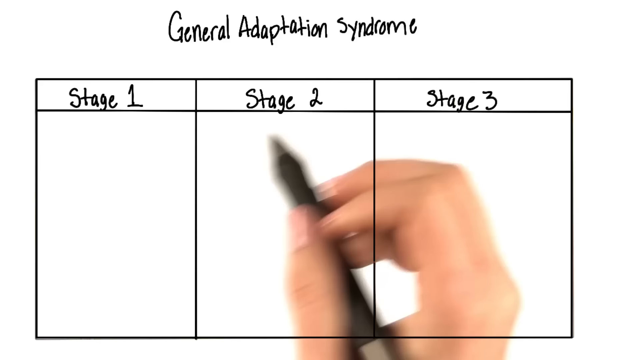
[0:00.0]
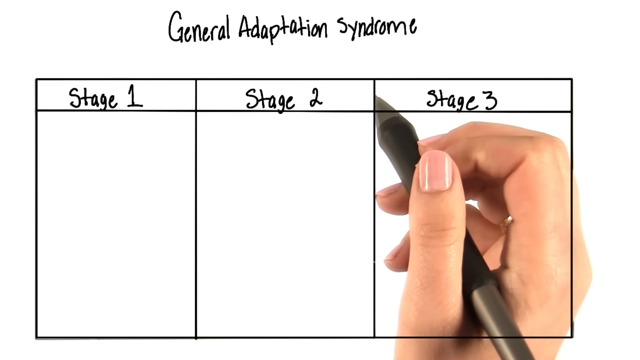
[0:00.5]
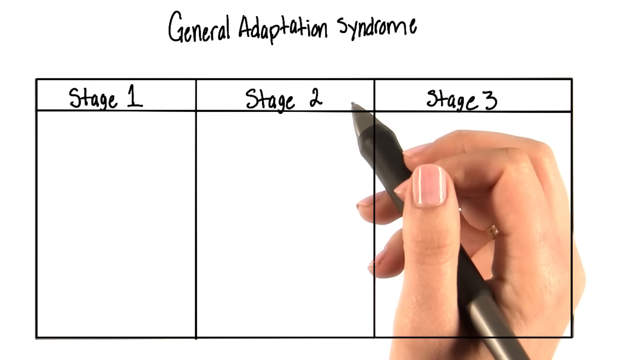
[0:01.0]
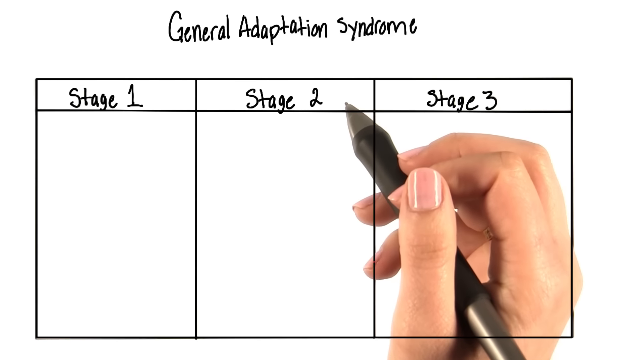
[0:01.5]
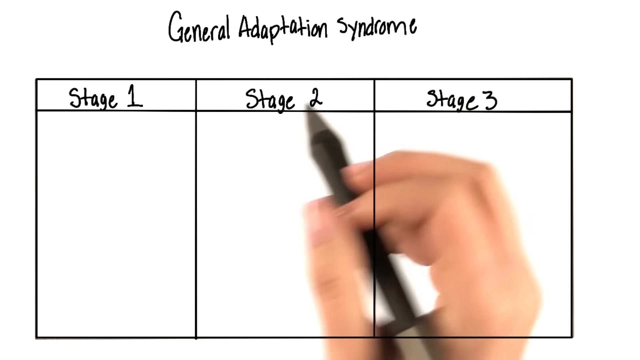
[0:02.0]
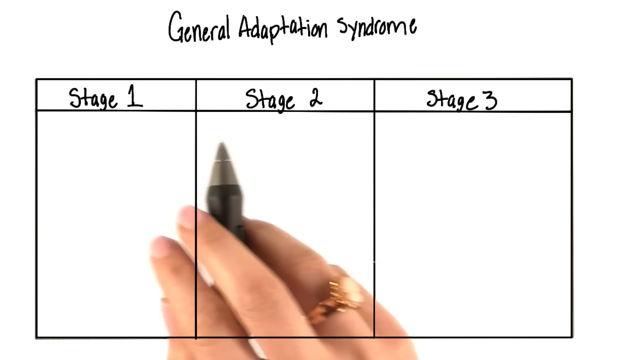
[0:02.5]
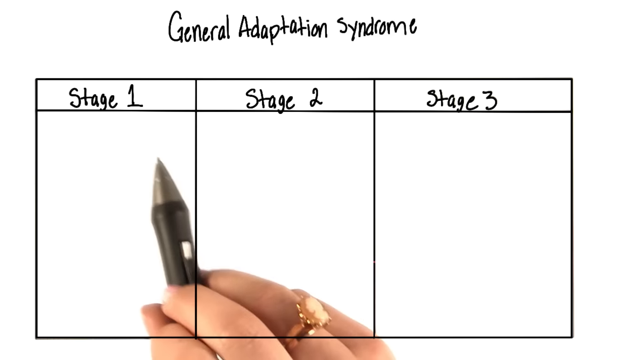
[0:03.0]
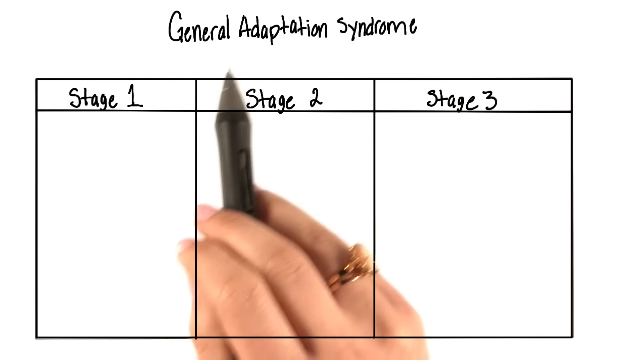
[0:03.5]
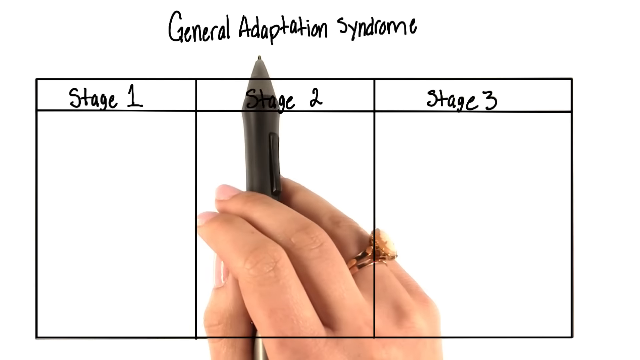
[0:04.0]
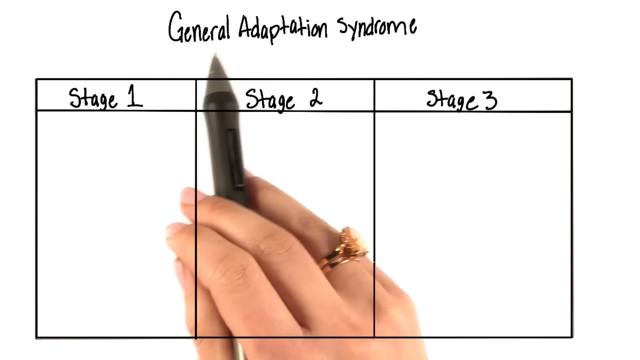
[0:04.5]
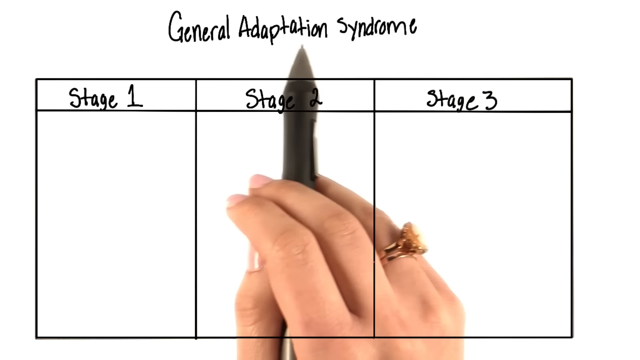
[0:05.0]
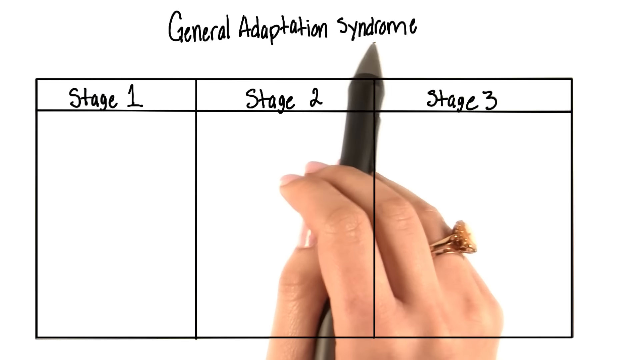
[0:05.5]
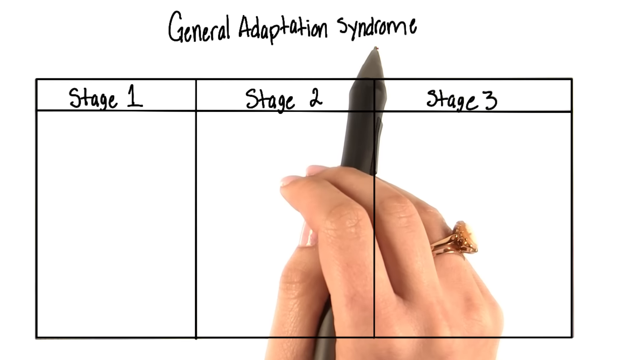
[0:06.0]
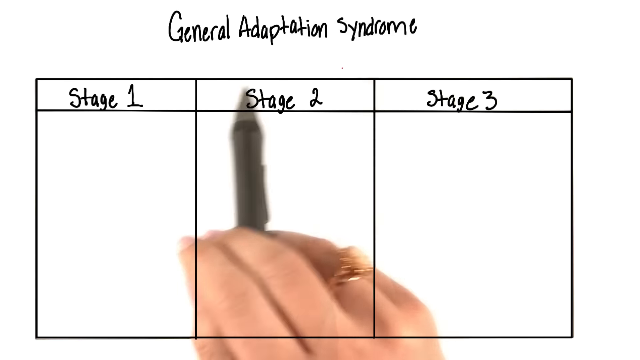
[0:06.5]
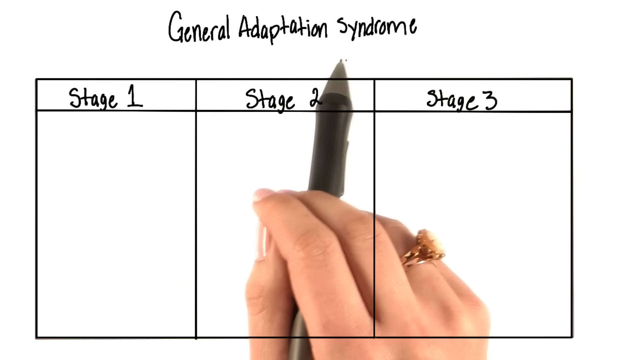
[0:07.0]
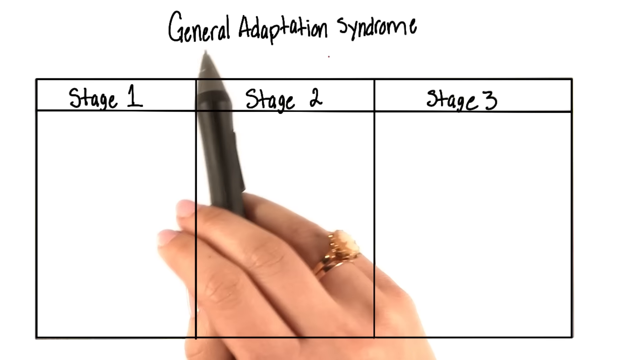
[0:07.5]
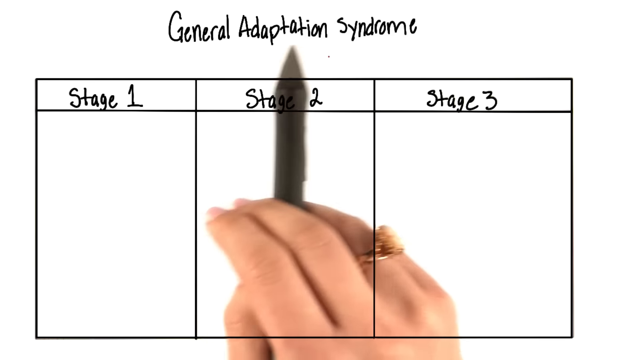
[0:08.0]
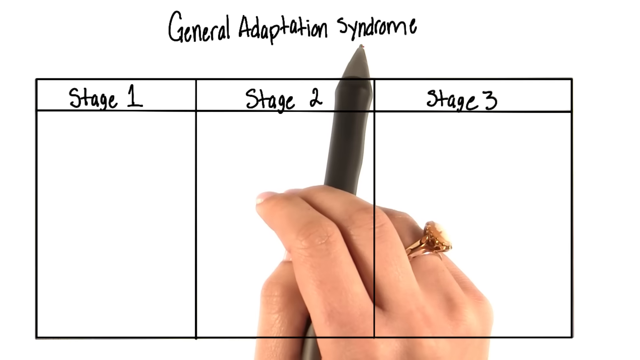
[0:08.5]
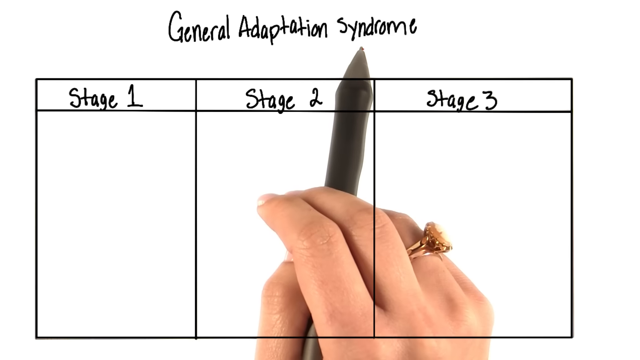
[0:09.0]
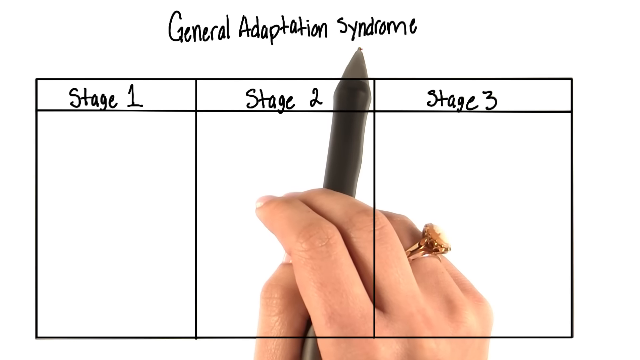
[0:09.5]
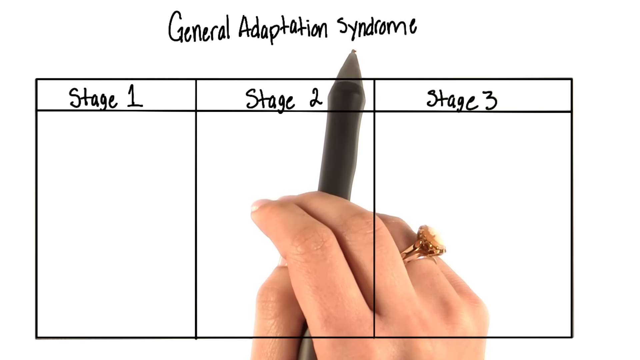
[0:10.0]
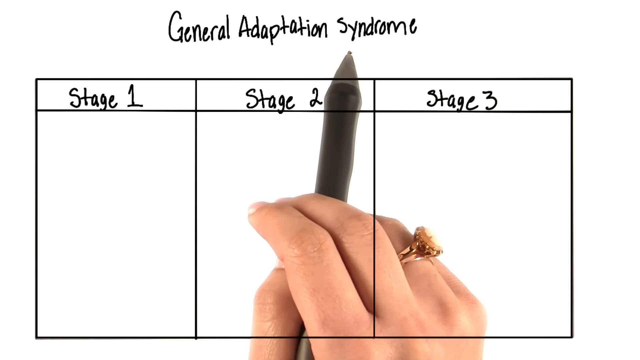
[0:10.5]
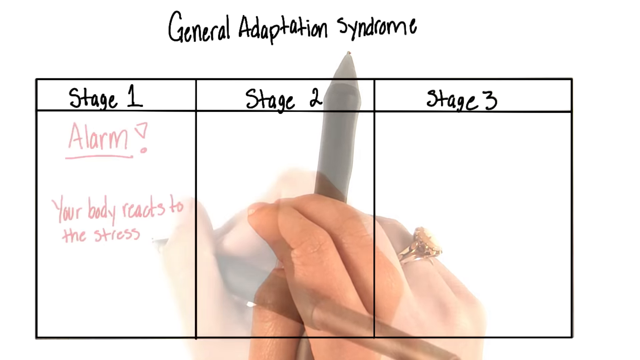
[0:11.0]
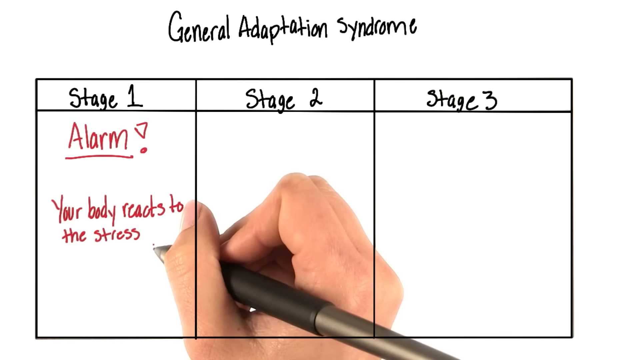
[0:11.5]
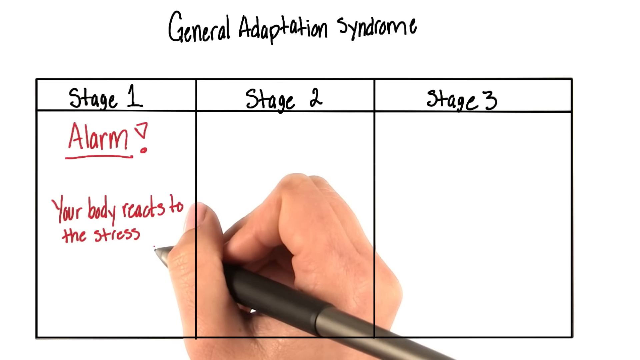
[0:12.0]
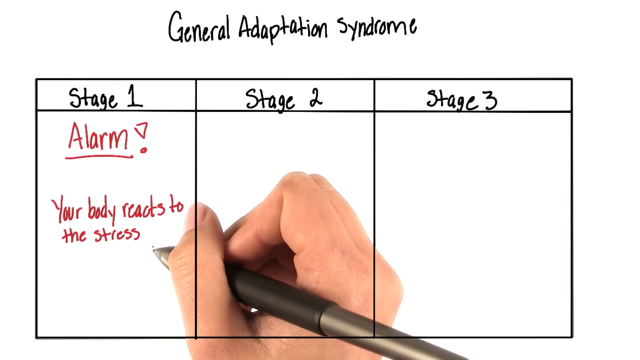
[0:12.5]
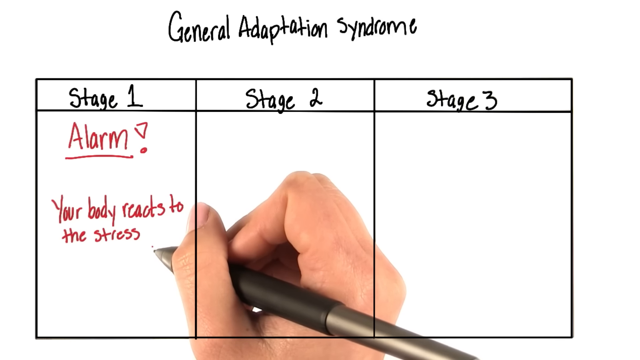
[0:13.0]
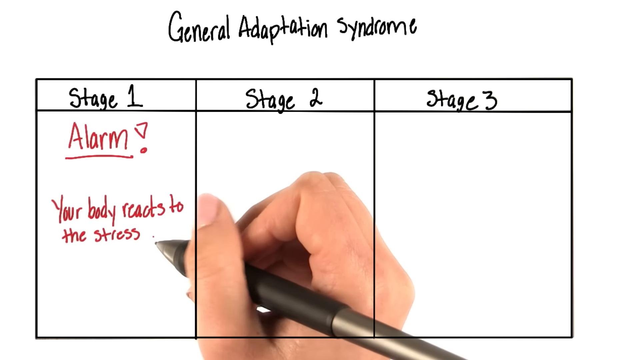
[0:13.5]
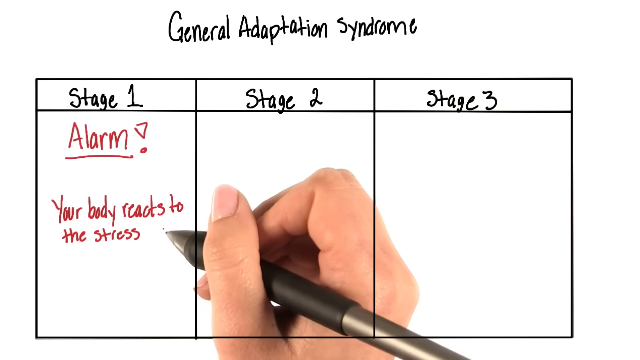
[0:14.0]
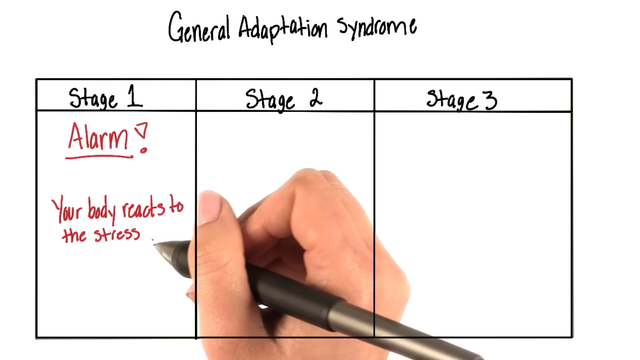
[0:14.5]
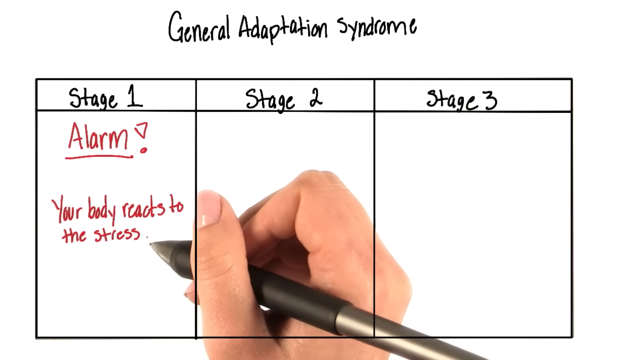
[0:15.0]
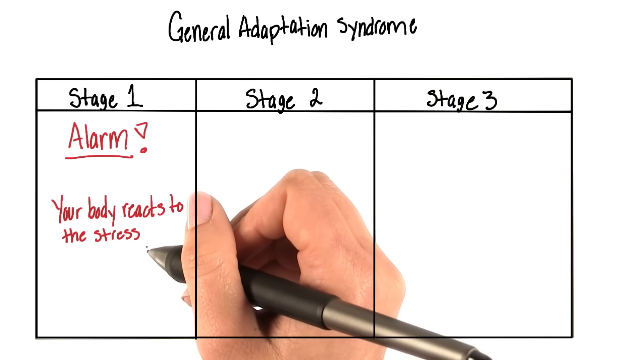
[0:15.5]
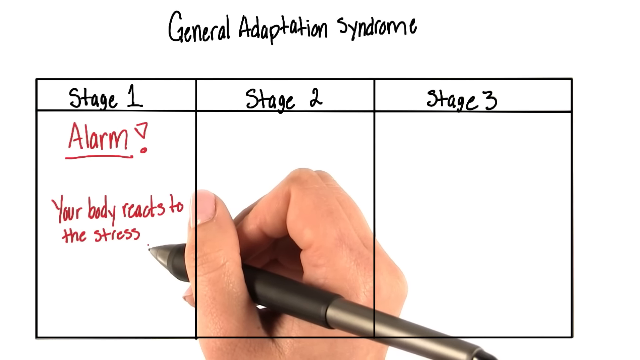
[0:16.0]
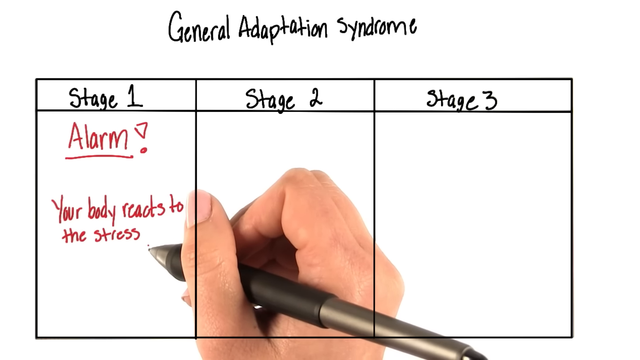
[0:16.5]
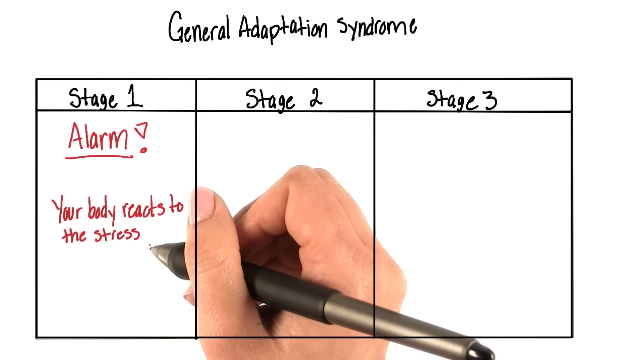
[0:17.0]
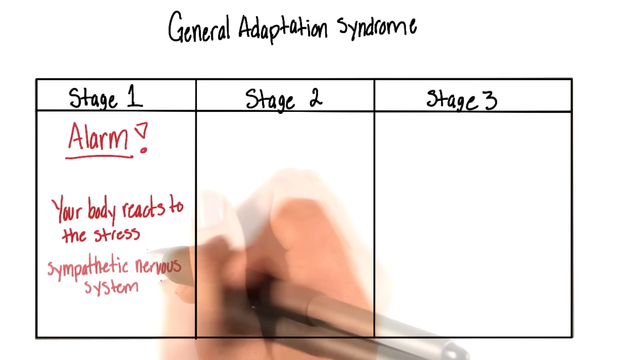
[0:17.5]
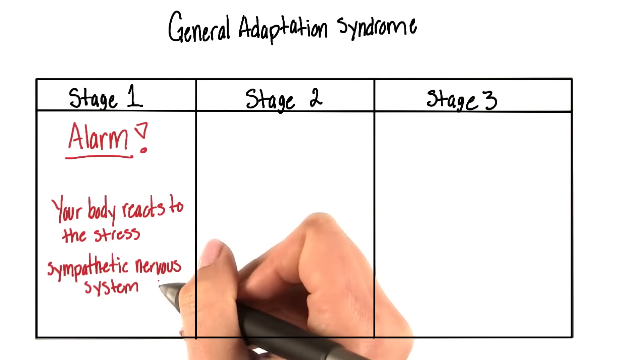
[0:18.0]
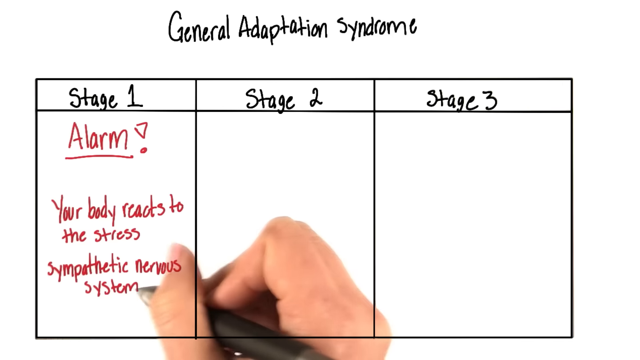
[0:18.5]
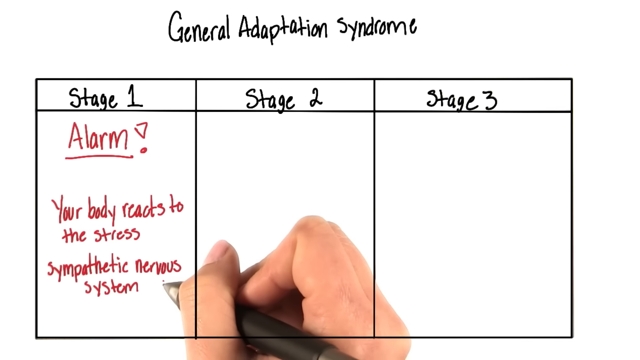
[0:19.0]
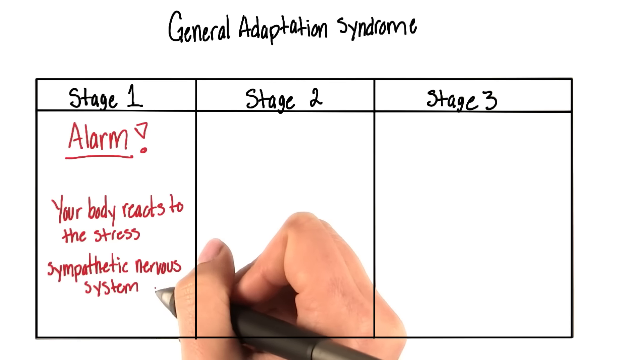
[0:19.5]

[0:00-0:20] A whiteboard has three columns drawn on it, with headers in cells: the left one says "stage one", the next says "stage two", and the one on the right says "stage three". A hand holding a pen moves around the board. The hand wears an old-fashioned gold ring with a tan face and has pink nail polish; it is probably a woman's. She writes "alarm!" and underlines it, then writes "your body reacts to the stress" and "sympathetic nervous system", all in red. As she writes, the columns appear on top of her hand, so this seems to be some type of program for writing on the screen, with what is already on the screen showing on the back of her hand.